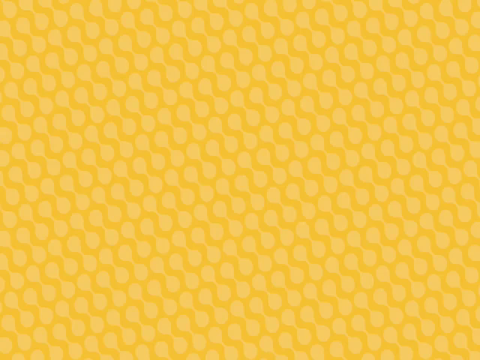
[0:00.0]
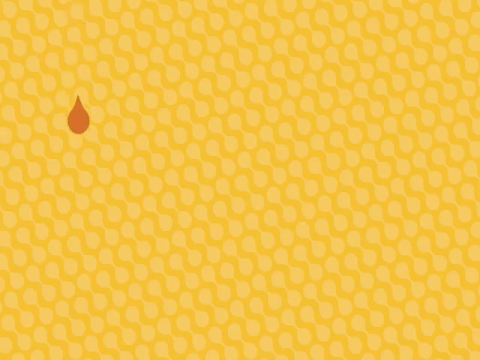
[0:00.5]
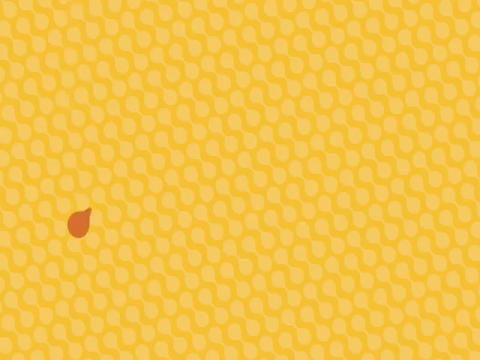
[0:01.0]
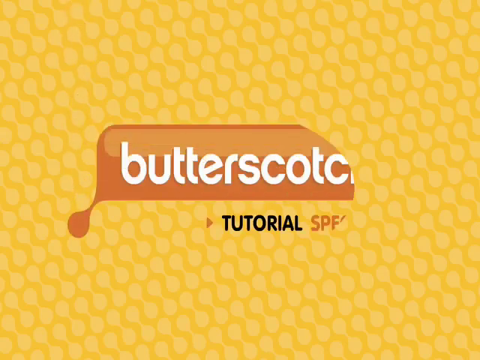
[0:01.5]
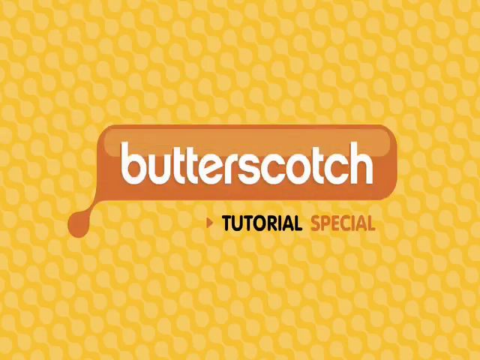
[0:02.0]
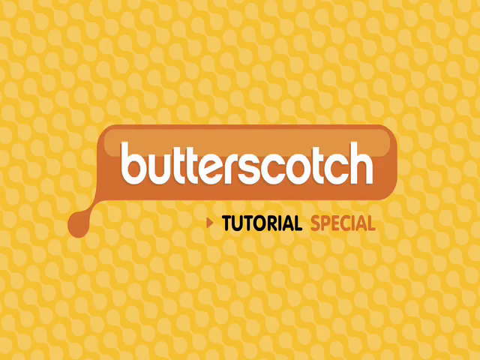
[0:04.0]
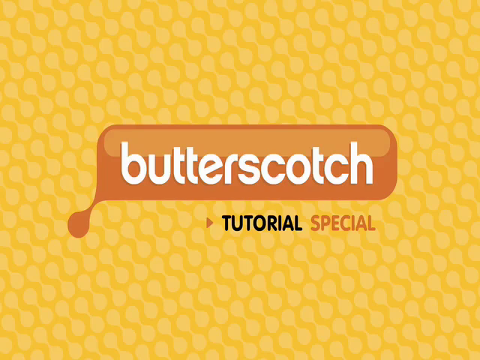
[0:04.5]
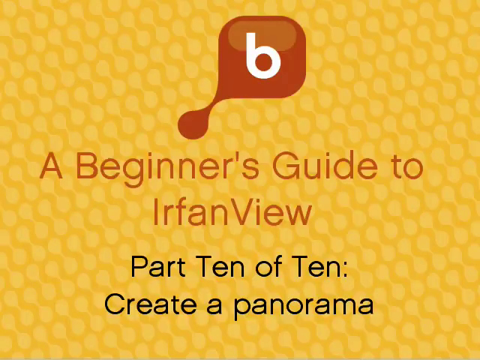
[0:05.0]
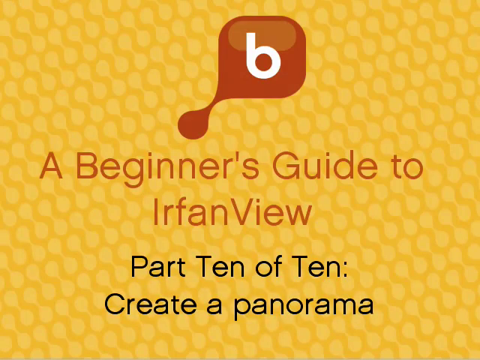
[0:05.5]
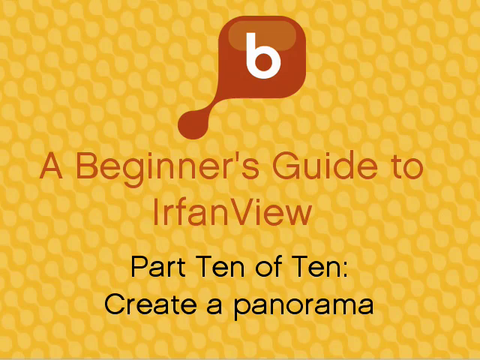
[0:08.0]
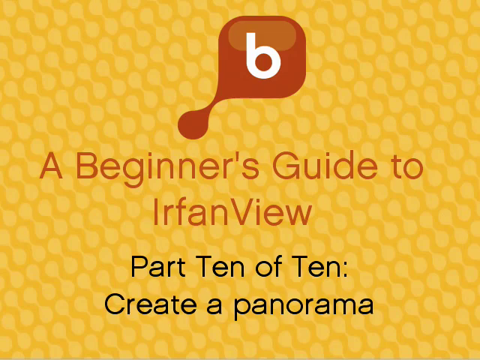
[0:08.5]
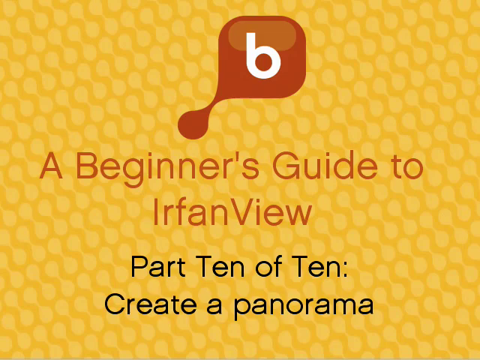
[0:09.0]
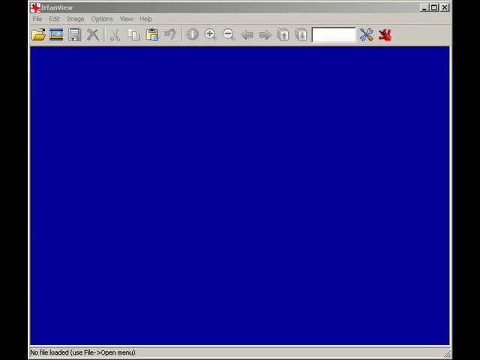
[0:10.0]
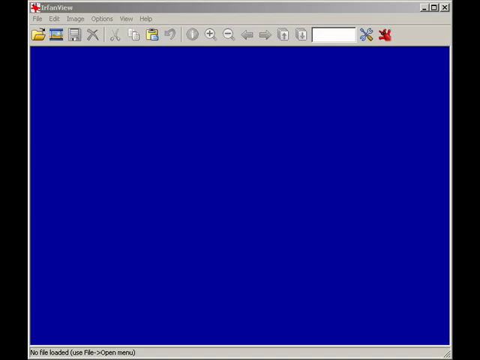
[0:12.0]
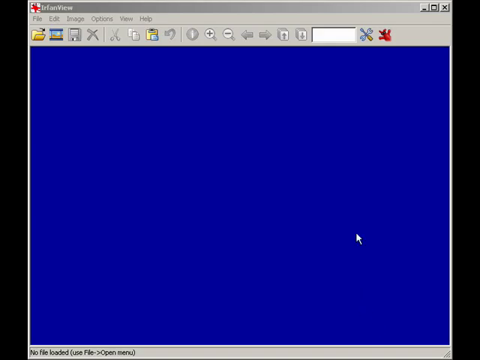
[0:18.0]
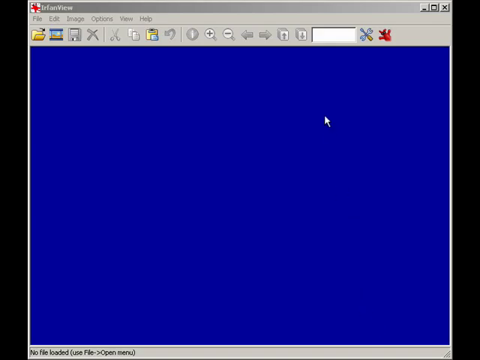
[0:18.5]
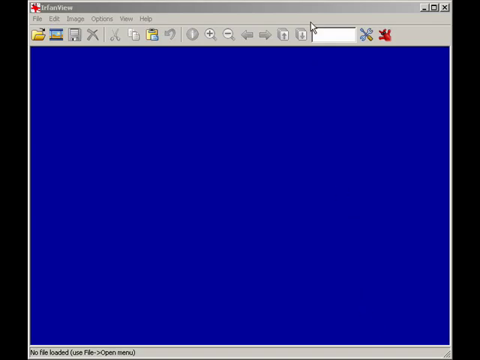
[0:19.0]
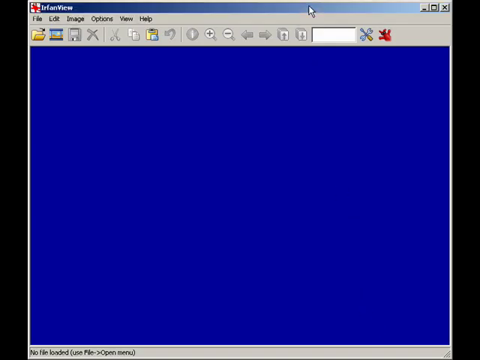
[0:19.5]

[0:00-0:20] The background has little lemon-colored bells or circles with little lines kind of interconnecting them; the circles are a slightly lighter color, and looked at closely the pattern seems to resemble corn up close. A darker orange drop comes down on the left side and forms into "butterscotch" in white. The droplet comes down, splashes and forms a rectangular box, kind of diagonal toward the top right, with somewhat curved corners. Underneath the E there is a dark orange arrow pointing to "tutorial special", with "tutorial" in black and "special" in dark orange. It then moves to a new slide with a lowercase "b" at the very top center and, below it in black, "a beginner's guide to IRFAN view", with "part 10 of 10" underneath and then "create a panorama". The slide has the same light yellow wallpaper, and another dark orange droplet goes into an orange box. Next comes a blue document-like window; the title at the top is hard to read. It has a menu with file, edit, image, options, view and help, like other computer programs. Below that are icons: an open file folder with an arrow, a disk that is grayed out and deactivated, an X, scissors, and zooms. The document area is blue with nothing showing yet. The man drags the arrow toward the bottom right, kind of out of view, then comes up and stops at an item on the taskbar; when he clicks it, it goes from a gray to a blue bar, almost as if it is active now.